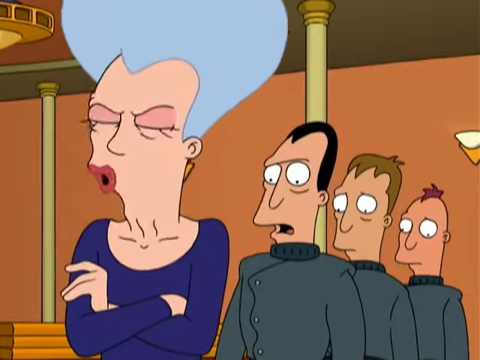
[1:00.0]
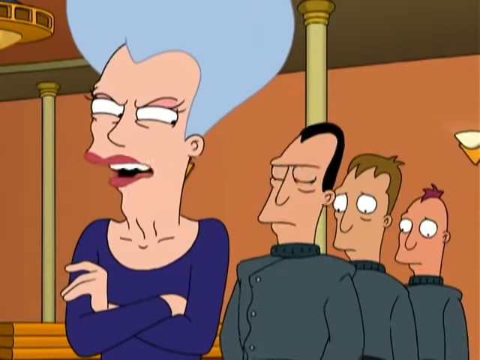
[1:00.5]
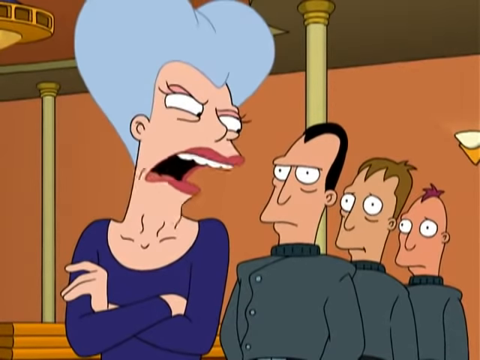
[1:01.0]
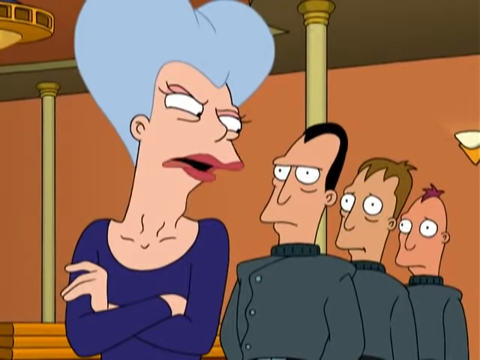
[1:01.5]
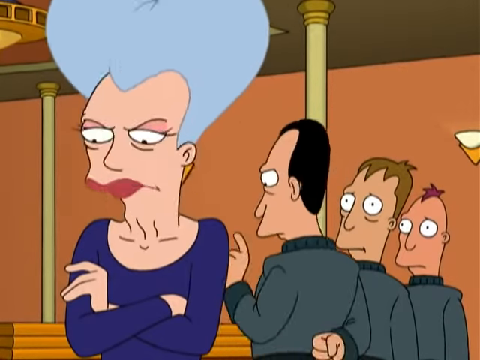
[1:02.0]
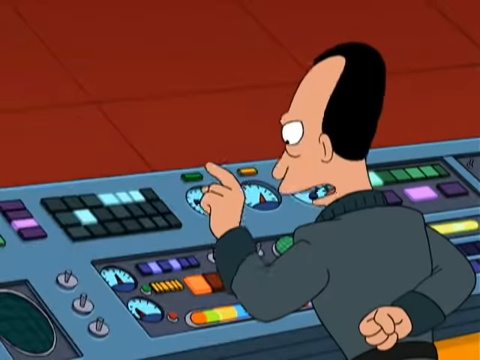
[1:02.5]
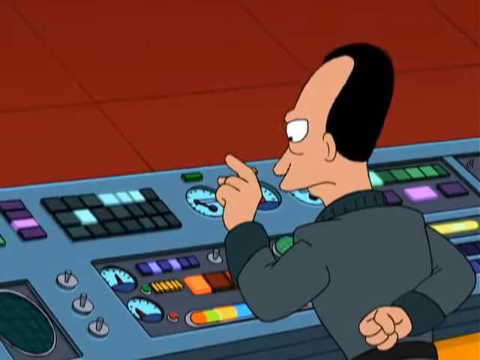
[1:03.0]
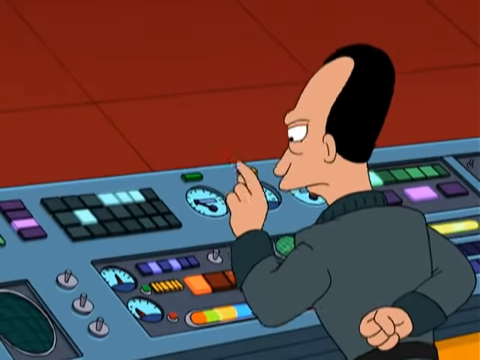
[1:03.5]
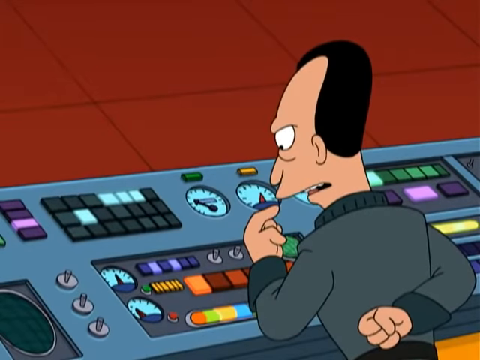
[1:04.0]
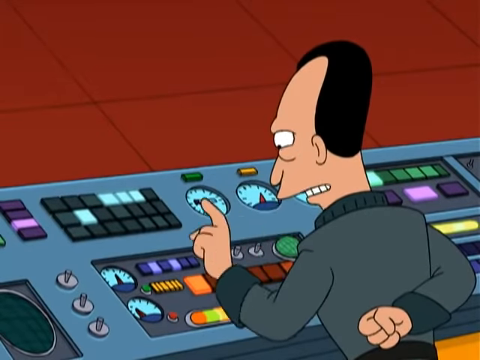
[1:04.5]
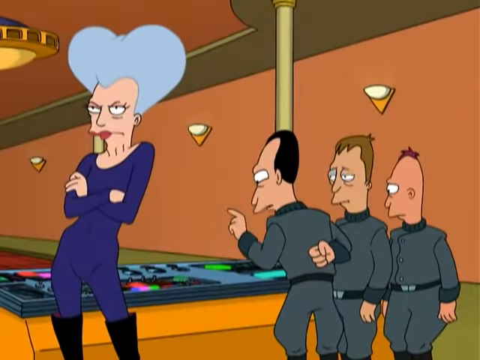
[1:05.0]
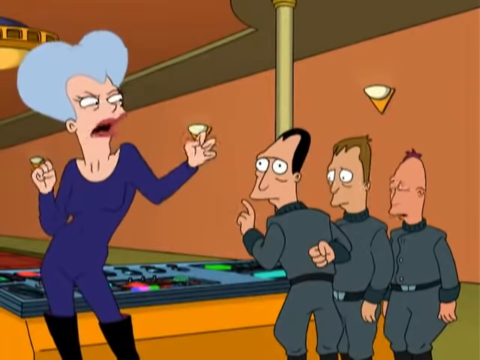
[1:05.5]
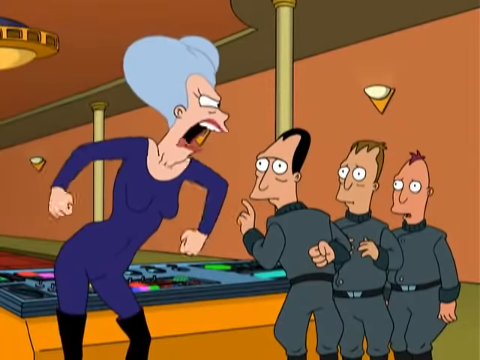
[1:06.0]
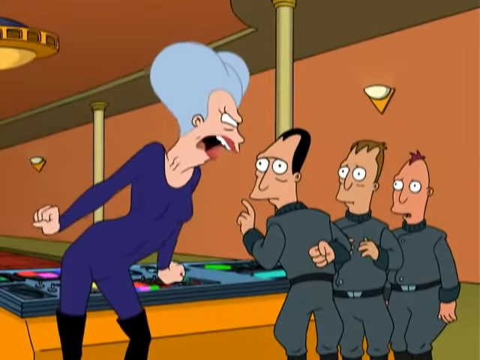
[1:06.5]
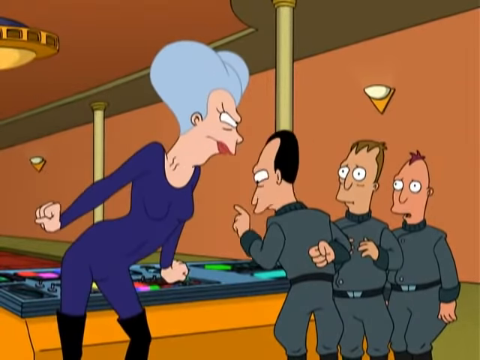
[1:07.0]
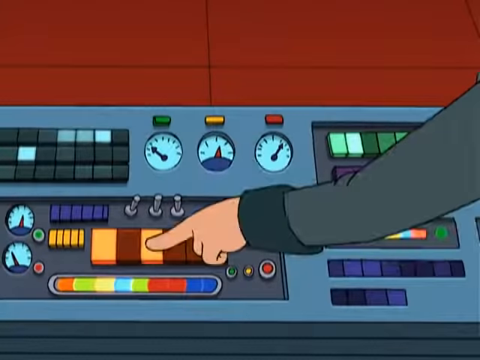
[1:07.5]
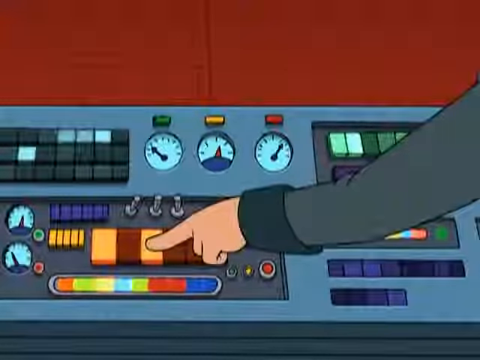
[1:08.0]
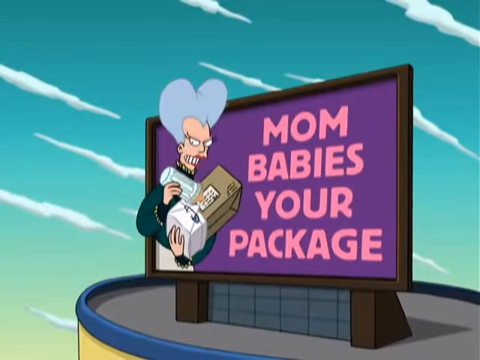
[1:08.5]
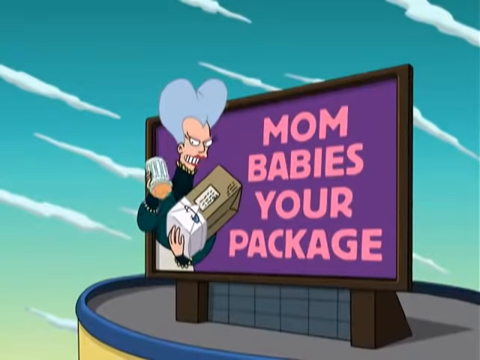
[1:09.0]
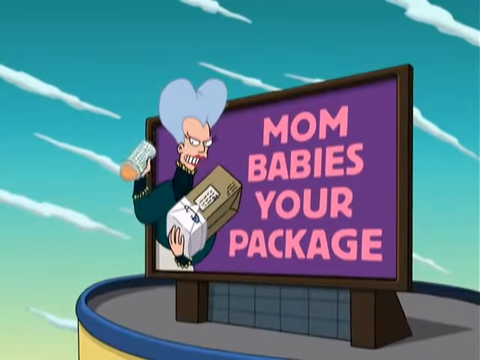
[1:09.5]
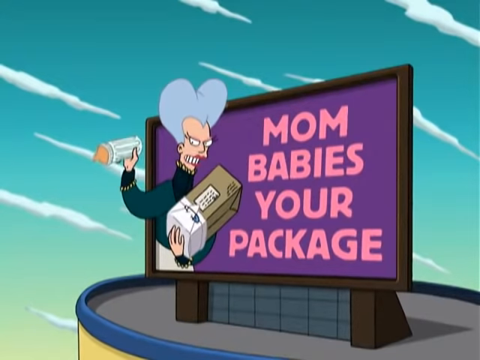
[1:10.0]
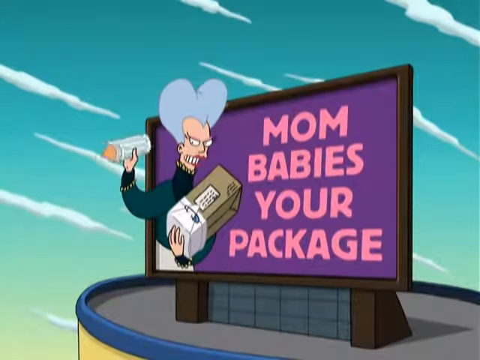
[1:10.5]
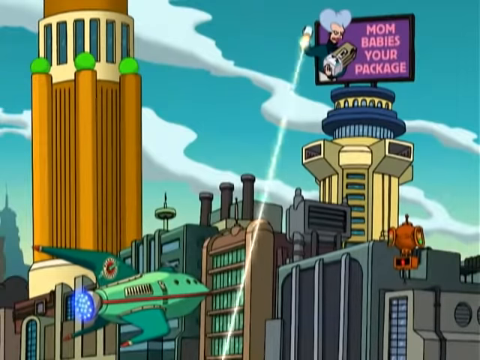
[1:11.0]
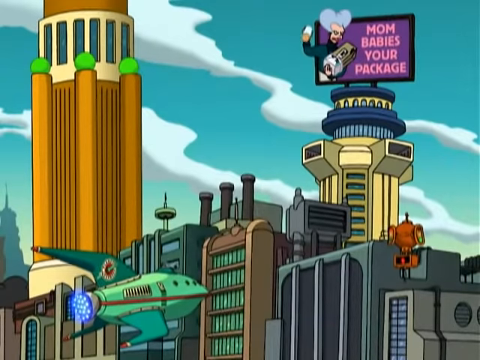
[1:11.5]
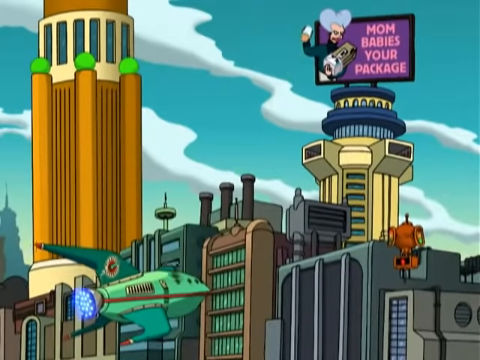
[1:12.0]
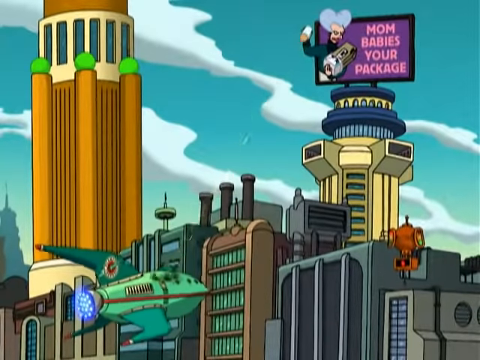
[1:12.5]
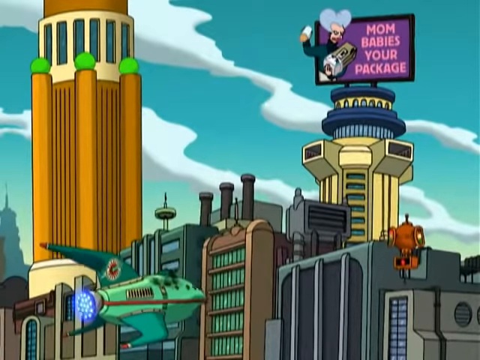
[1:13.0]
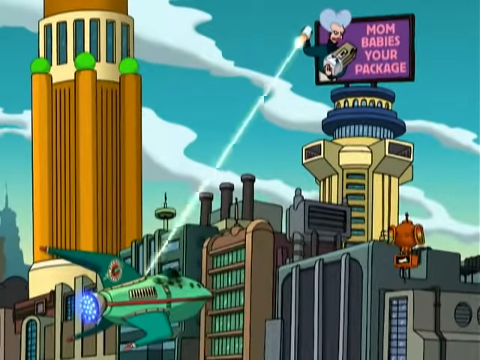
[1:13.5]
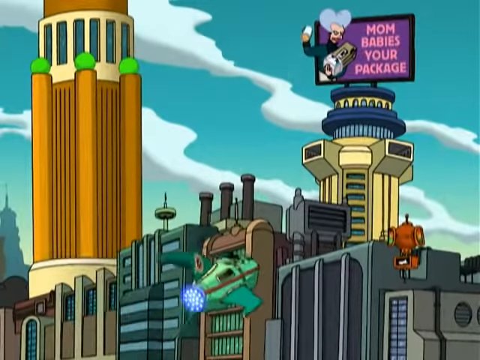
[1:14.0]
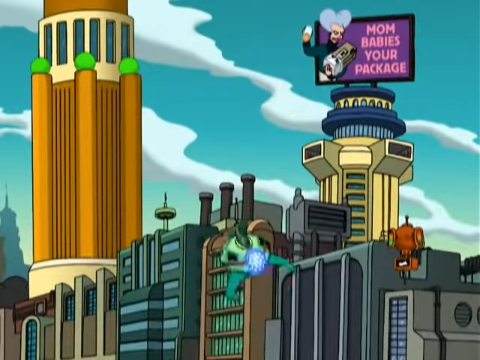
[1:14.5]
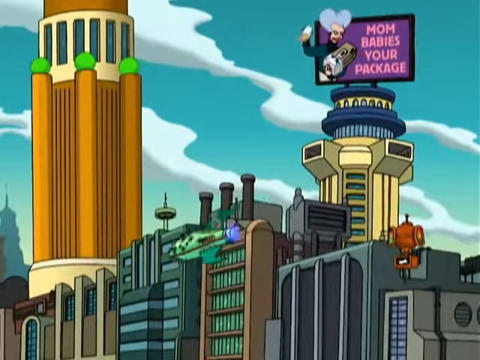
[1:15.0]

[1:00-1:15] A woman in a purple dress, with gray hair shaped like a heart, is in front of a line of three men in suits standing behind her. She looks like she commands them and is very angry, apparently after the man mooned her; she seems to be some sort of villain. A sign, like a billboard, says "mommy's baby's your package", and the figure next to the sign is actually holding a gun that can shoot at flying vehicles. The man in the blue shirt looks like he had been looking at this sign for some time, and the people may be discussing what the sign does. The scene goes back and forth, showing a lobster saying sorry or asking for forgiveness. The man in the booth in a navy blue suit moons his butt on the window, the evil woman appears to see him do this, and she then looks like she gives the men orders to shoot at the vehicle.